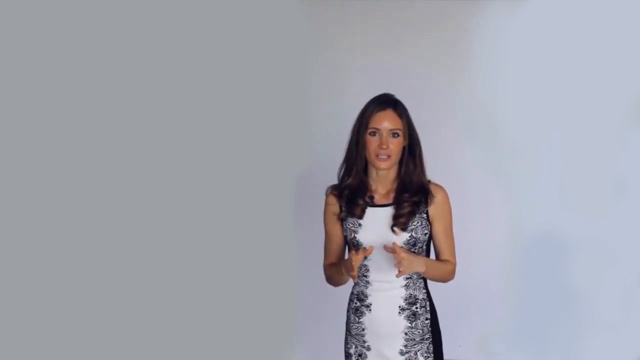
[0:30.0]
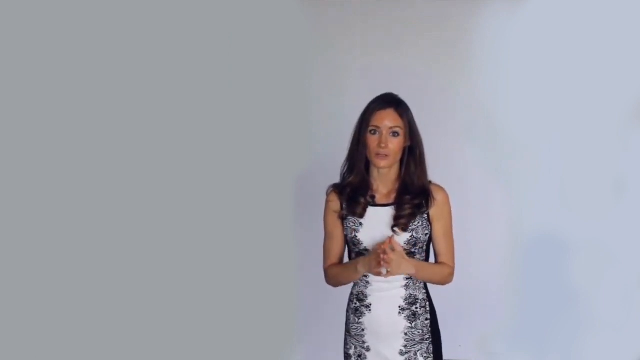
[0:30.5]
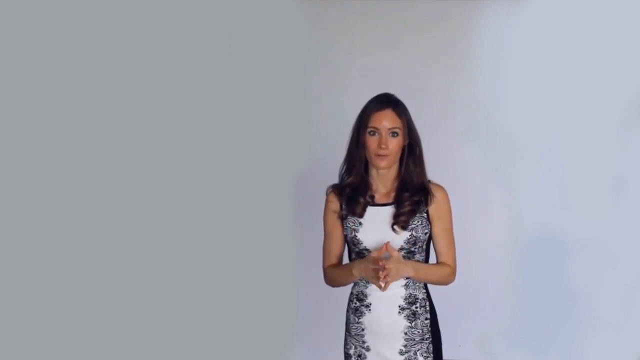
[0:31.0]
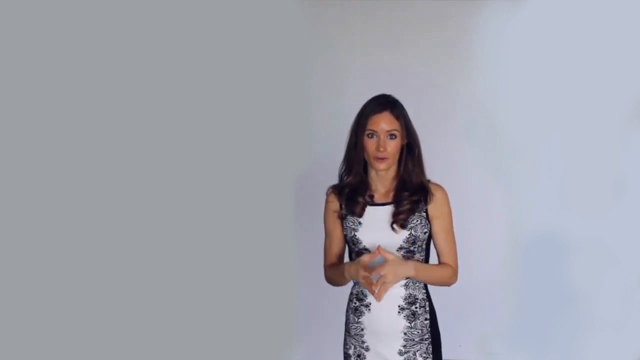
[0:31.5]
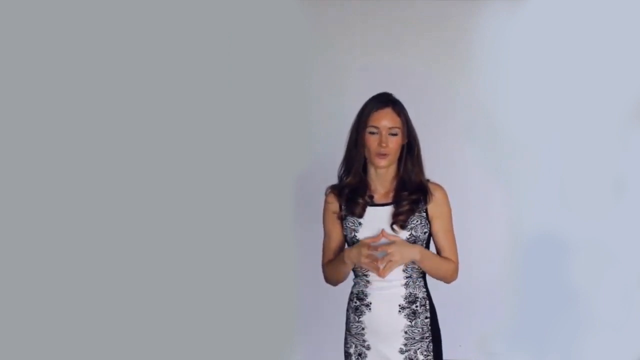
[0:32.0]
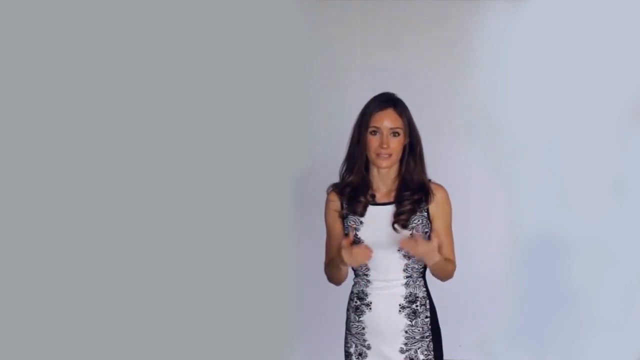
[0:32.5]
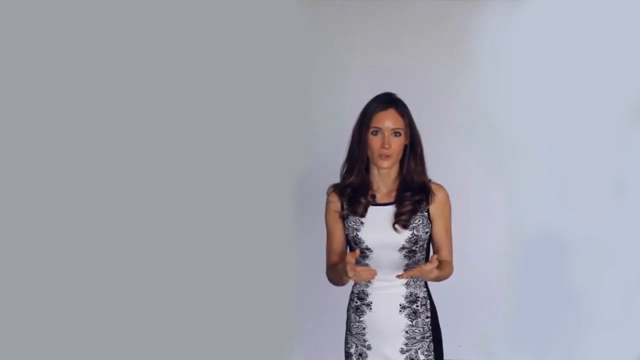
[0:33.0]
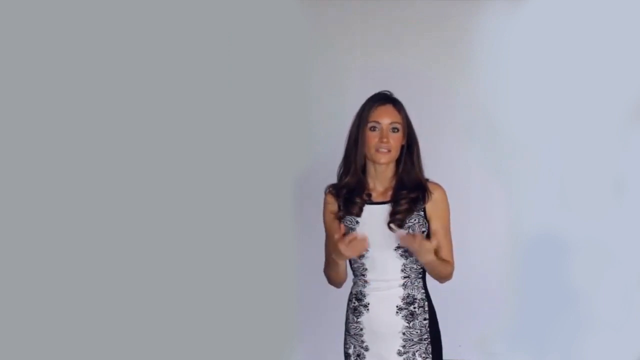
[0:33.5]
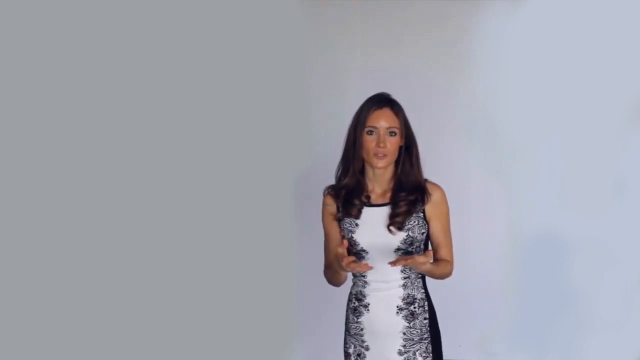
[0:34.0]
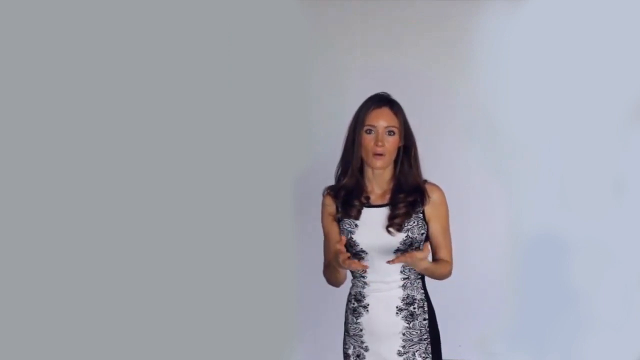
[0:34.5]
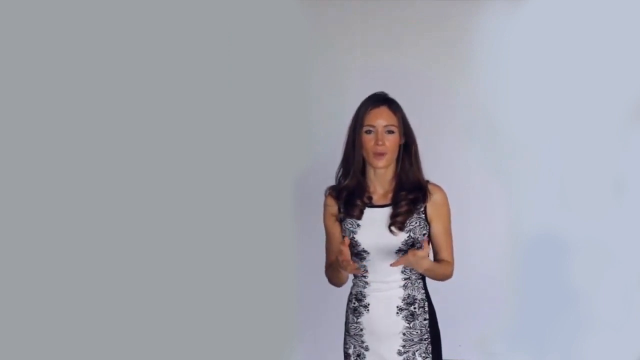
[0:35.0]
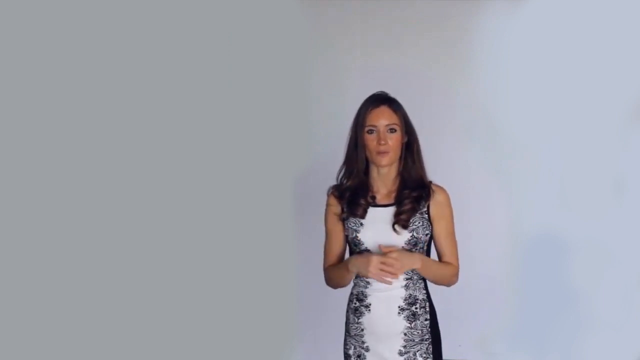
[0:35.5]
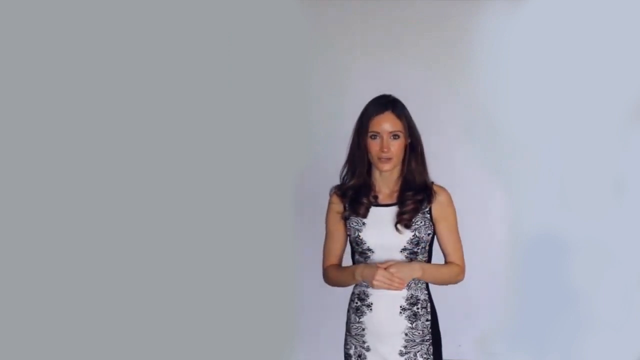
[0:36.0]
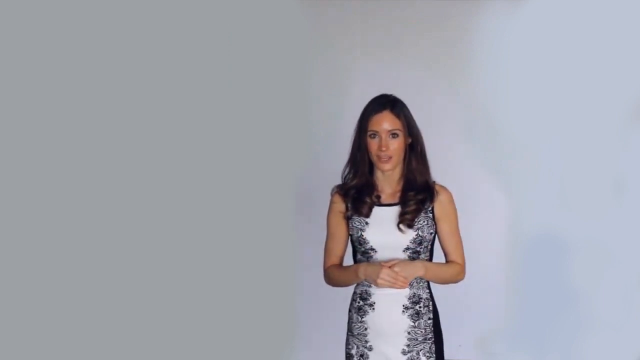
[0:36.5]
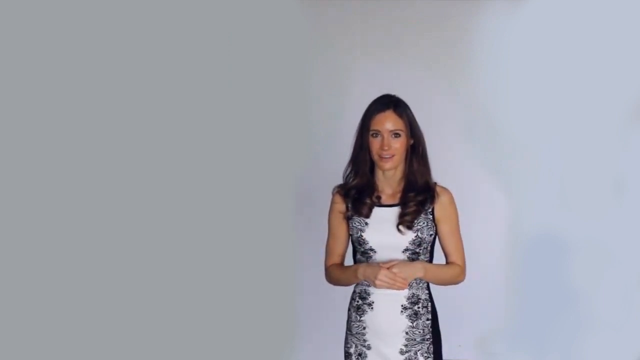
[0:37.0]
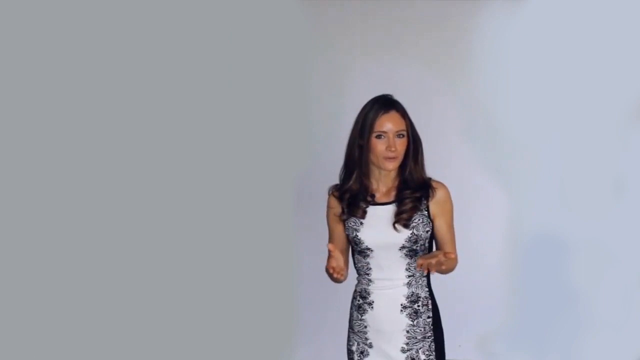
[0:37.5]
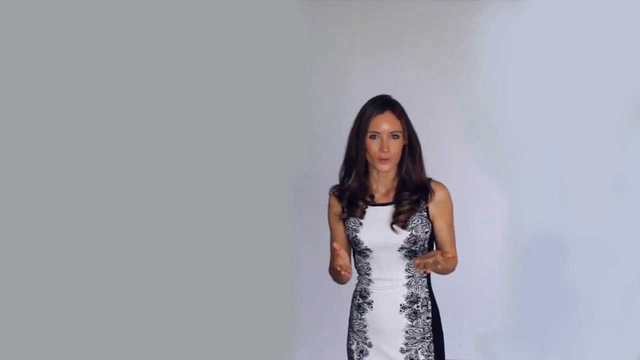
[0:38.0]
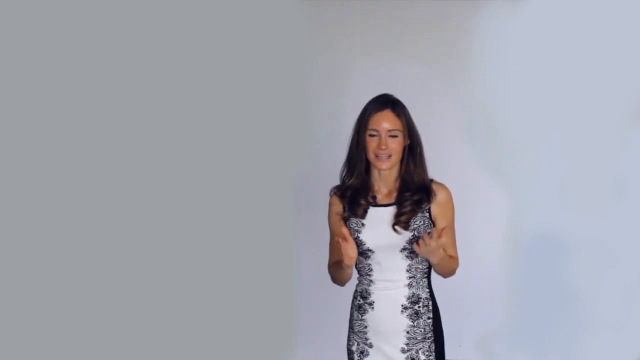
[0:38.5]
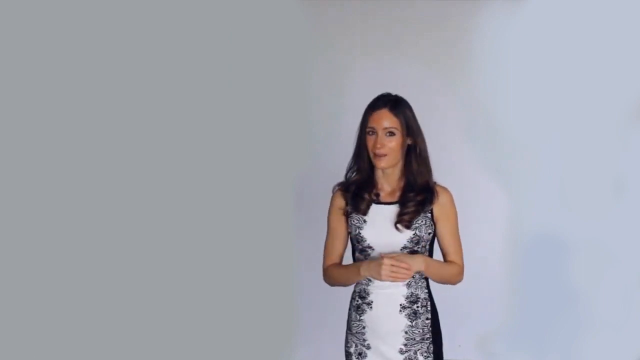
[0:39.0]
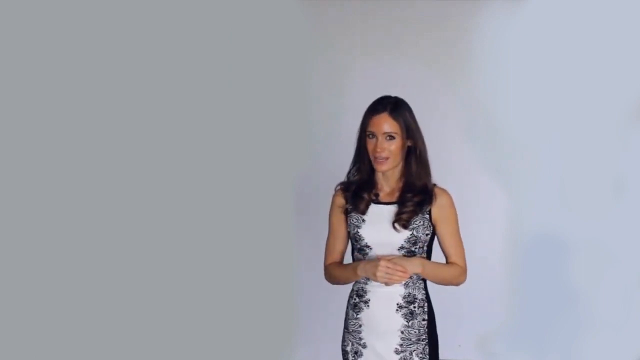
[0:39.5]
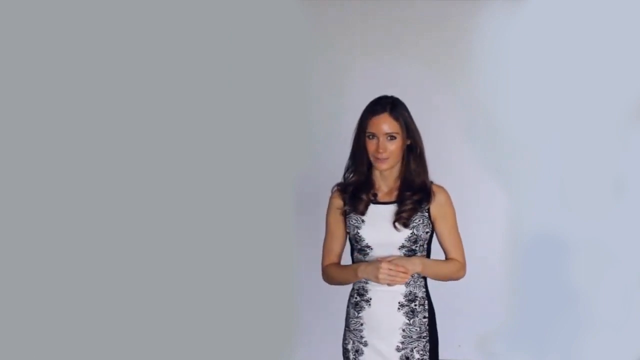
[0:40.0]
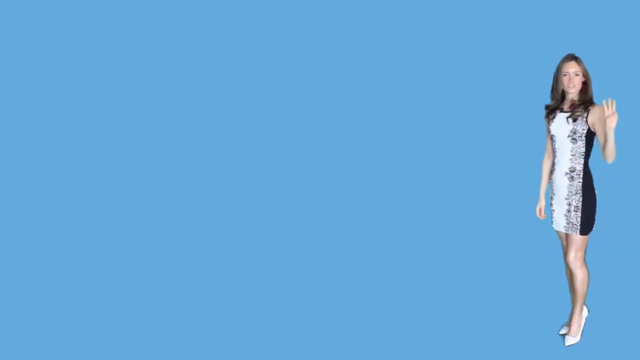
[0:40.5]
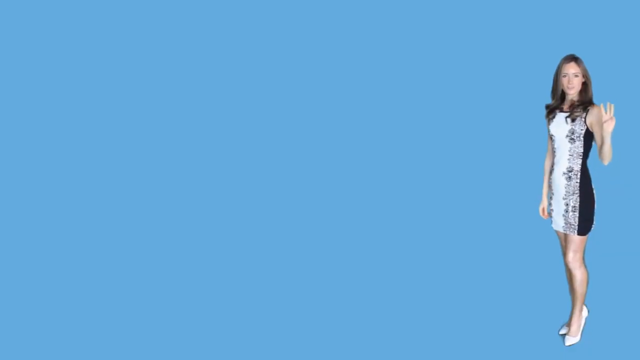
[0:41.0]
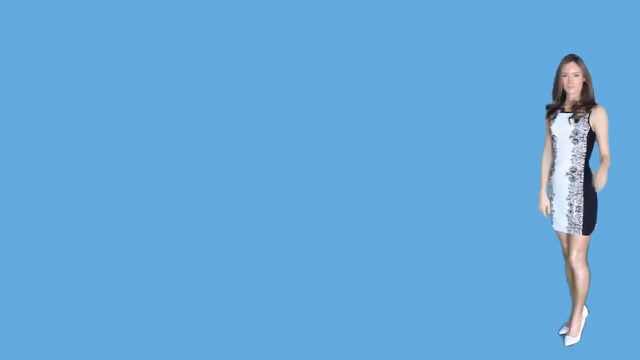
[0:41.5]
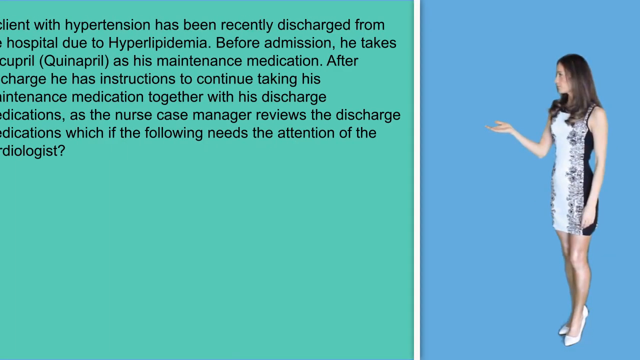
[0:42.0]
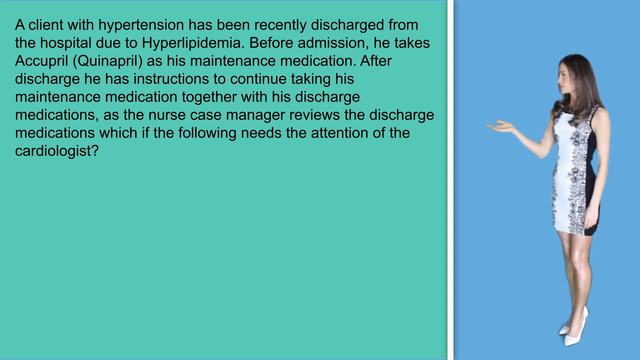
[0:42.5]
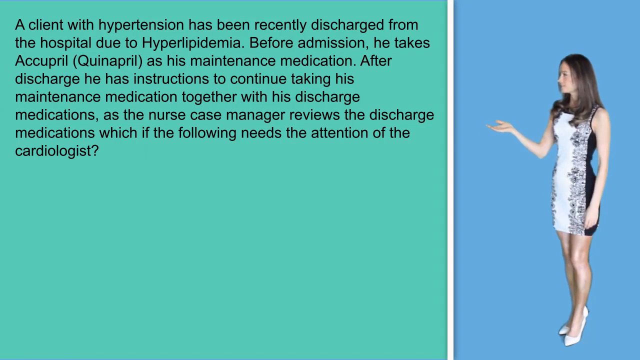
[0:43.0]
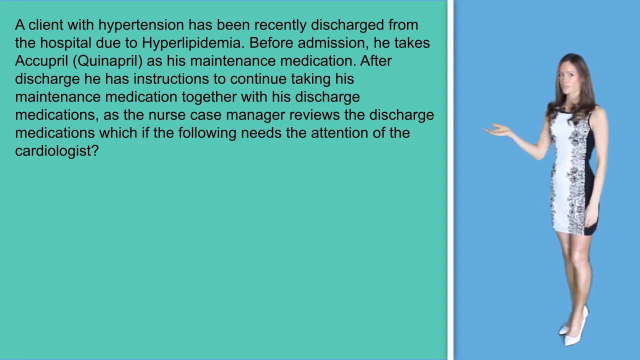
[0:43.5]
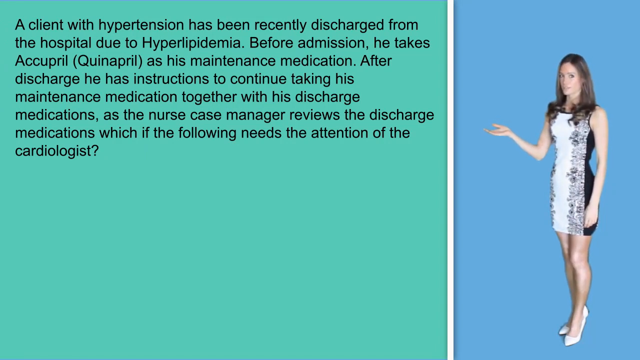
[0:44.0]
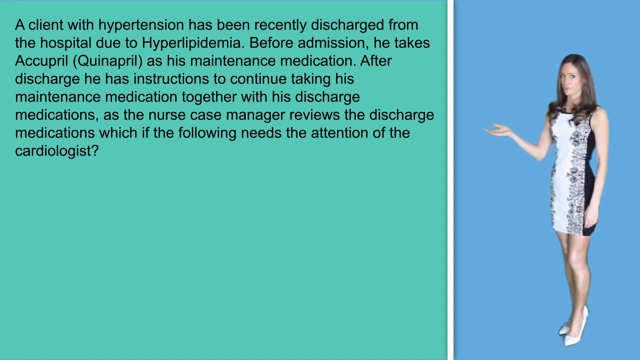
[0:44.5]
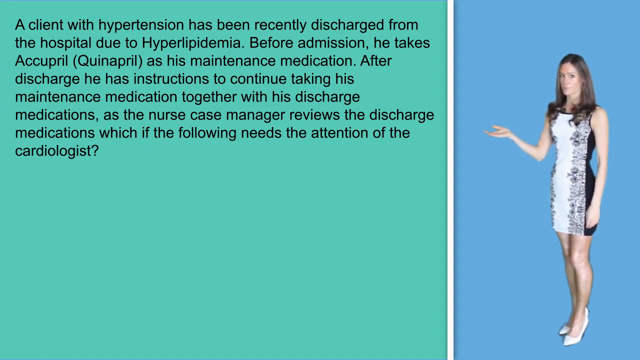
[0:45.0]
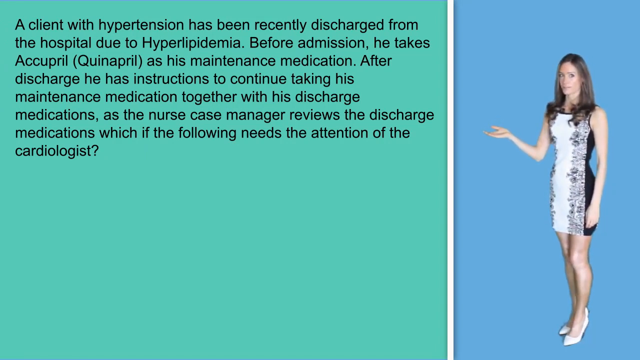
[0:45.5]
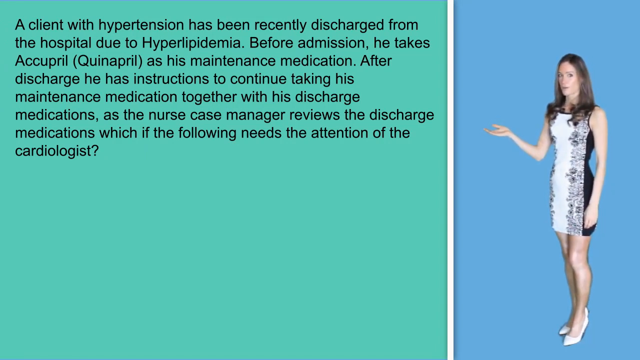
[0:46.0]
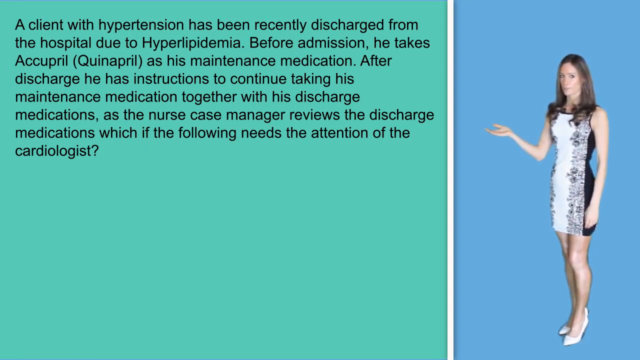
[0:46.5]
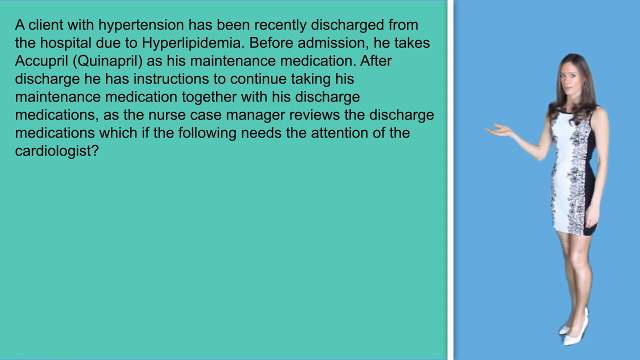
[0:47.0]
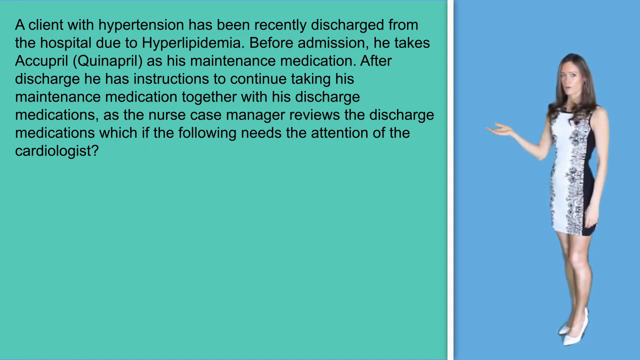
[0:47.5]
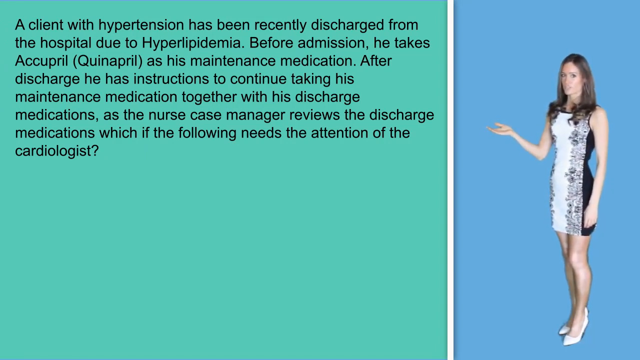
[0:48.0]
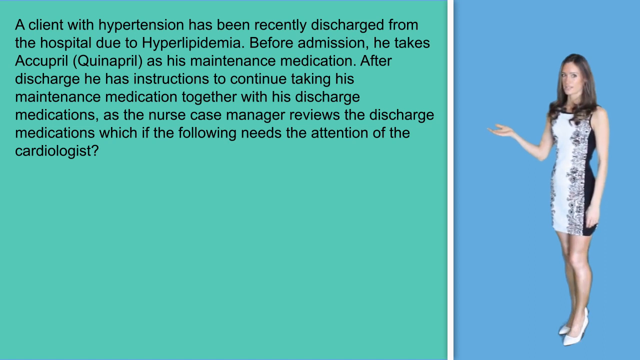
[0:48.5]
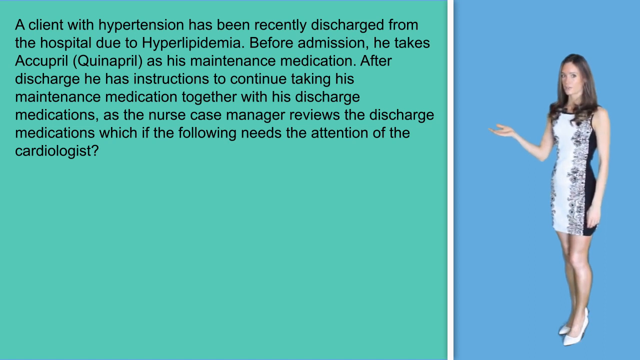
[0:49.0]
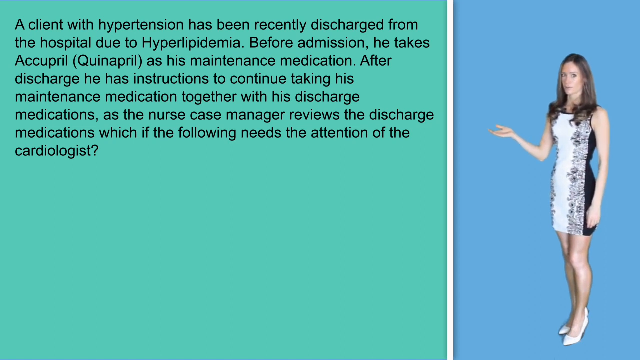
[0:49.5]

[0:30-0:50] Toward the right side of the screen, a woman in a white and black floral dress speaks into the camera. The dress is white down the center, flanked on either side by floral appliques that look black, possibly navy. She has long, apparently dark hair, stands in front of a white background, and is very animated with her hands, bringing them out and back in. She possibly has a mic clipped to her. After a long stretch of her speaking, the scene transitions to a baby blue background with her on the right side of the frame, holding up what looks like three fingers to the camera; she wears white heels. Text then appears on a robin's egg blue background in black: "A client with hypertension has been recently discharged from the hospital due to hyperlipidemia. Before admission, he takes quinapril as his maintenance medication. After discharge, he has instructions to continue taking his maintenance medication together with his discharge medications. As the nurse case manager reviews the discharge medications, which of the following needs the attention of the cardiologist?" She gestures toward the text with her hand, then looks back toward the camera.